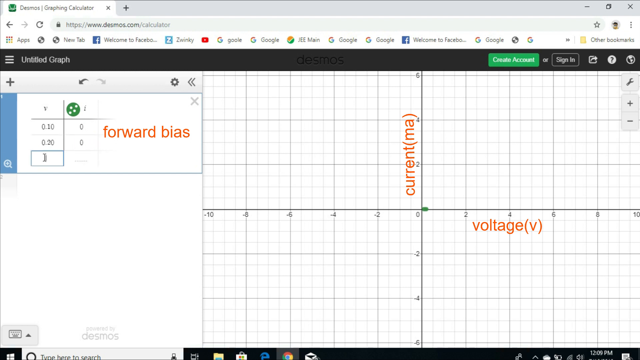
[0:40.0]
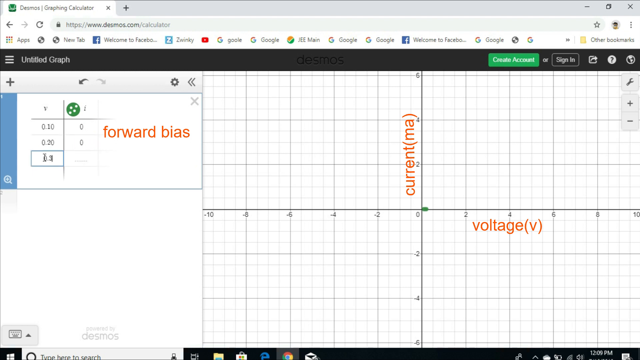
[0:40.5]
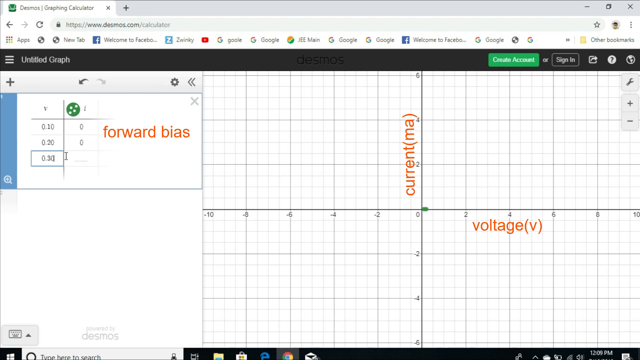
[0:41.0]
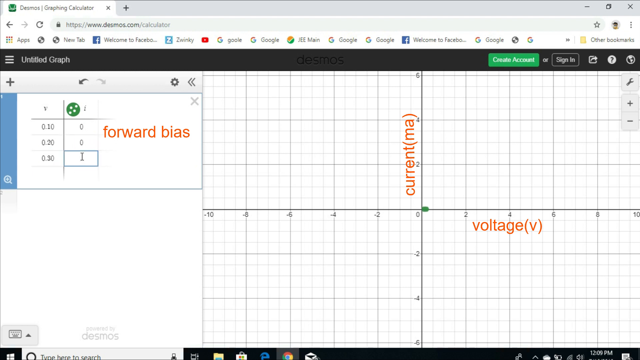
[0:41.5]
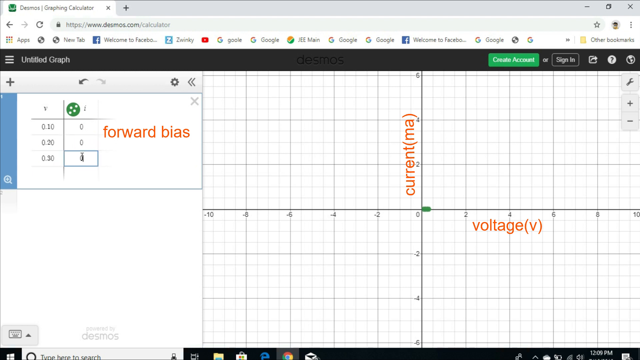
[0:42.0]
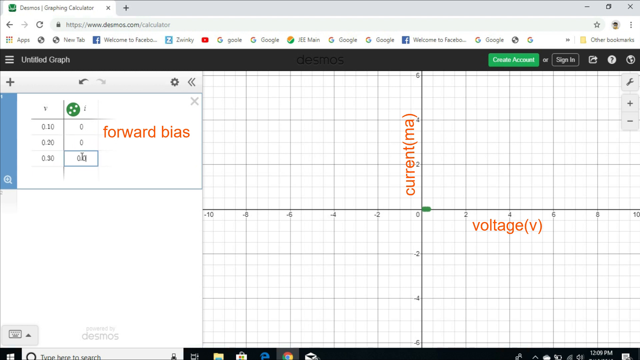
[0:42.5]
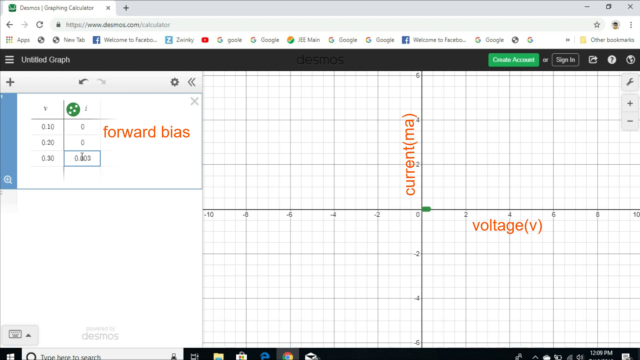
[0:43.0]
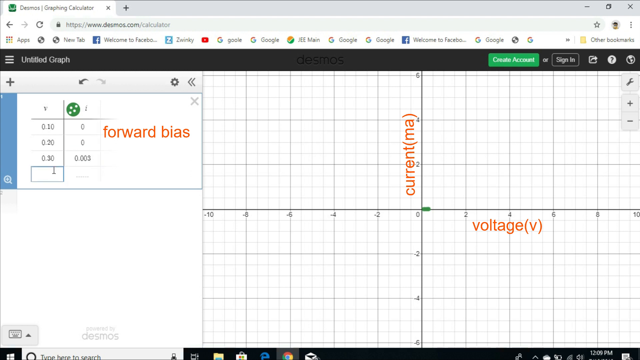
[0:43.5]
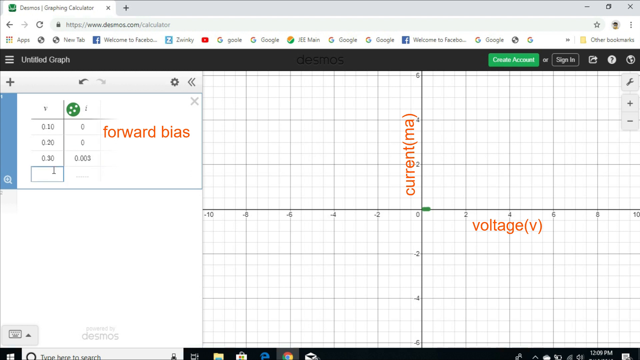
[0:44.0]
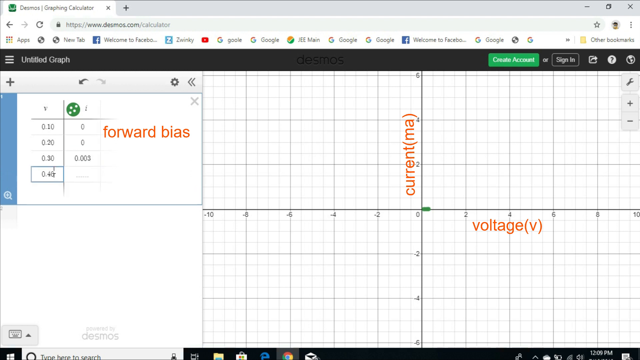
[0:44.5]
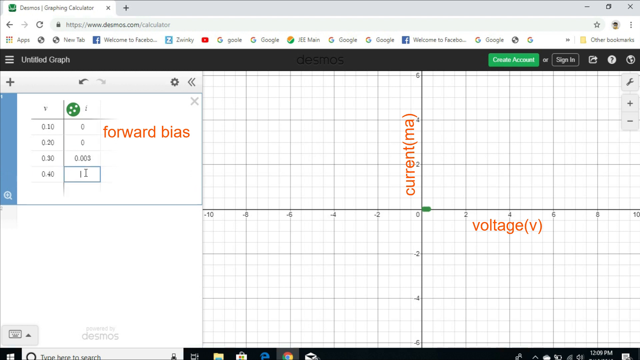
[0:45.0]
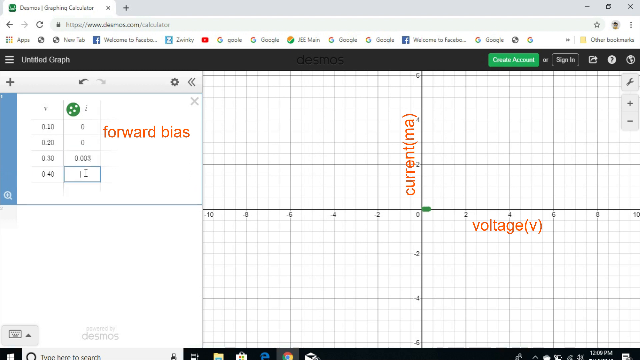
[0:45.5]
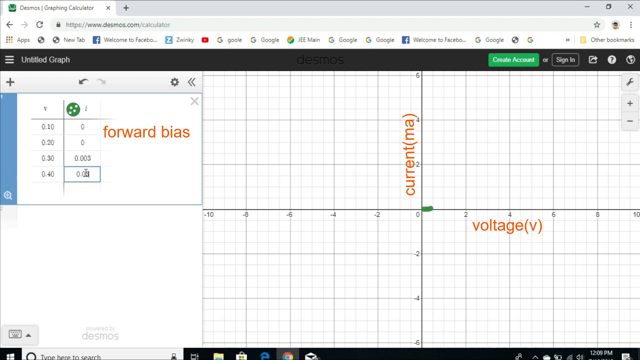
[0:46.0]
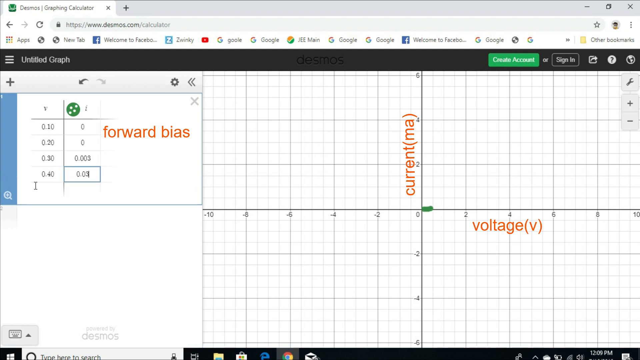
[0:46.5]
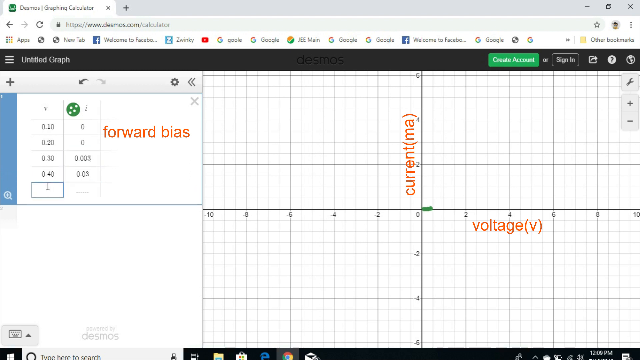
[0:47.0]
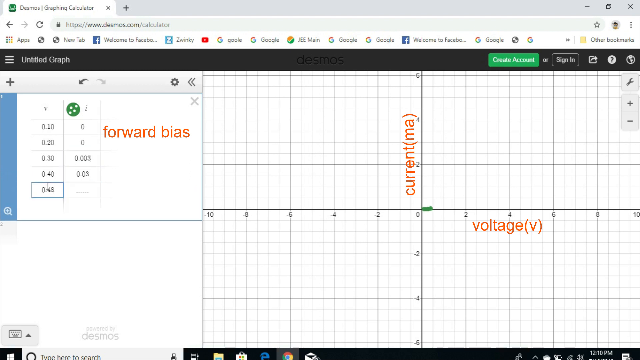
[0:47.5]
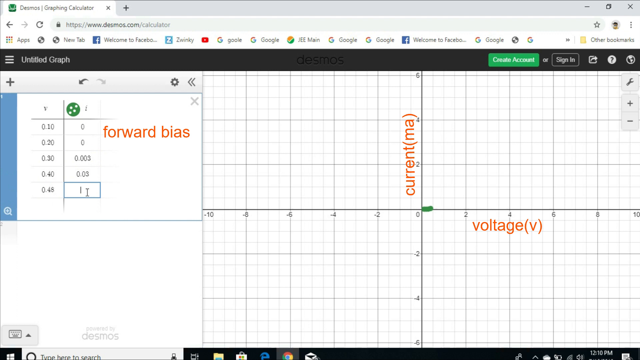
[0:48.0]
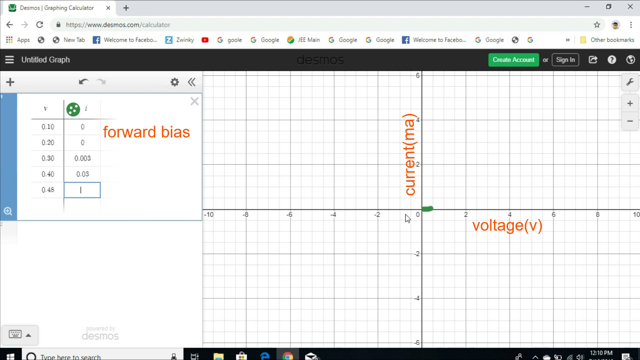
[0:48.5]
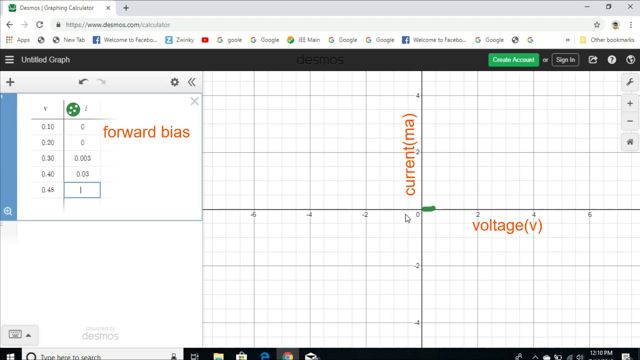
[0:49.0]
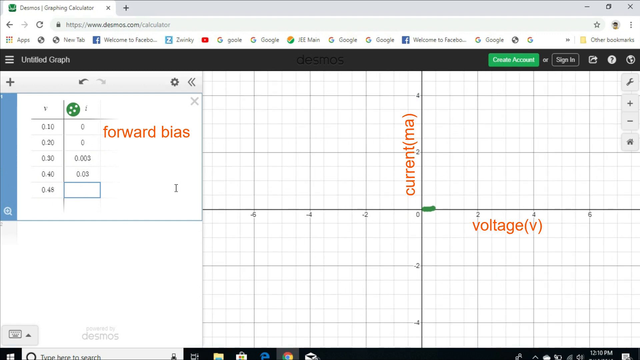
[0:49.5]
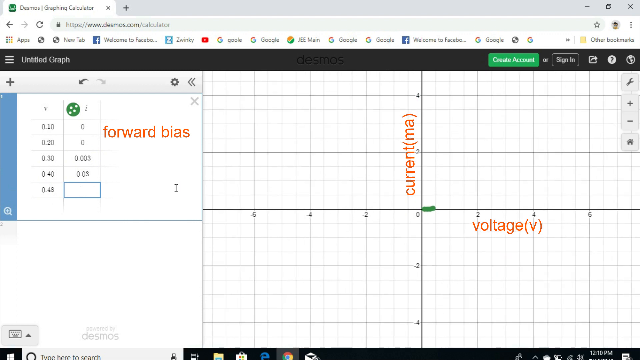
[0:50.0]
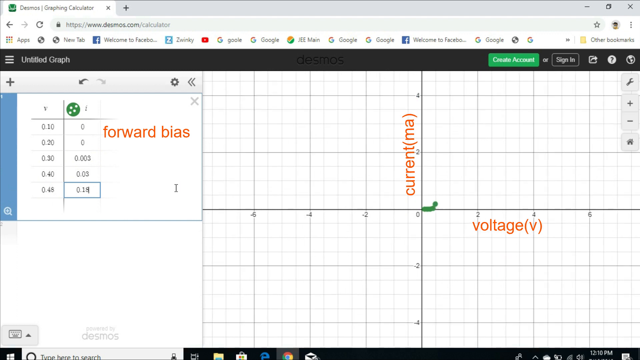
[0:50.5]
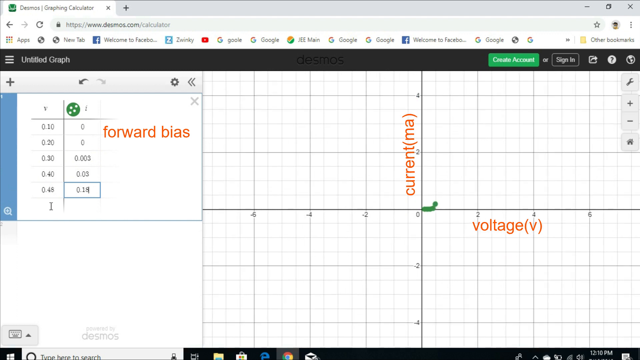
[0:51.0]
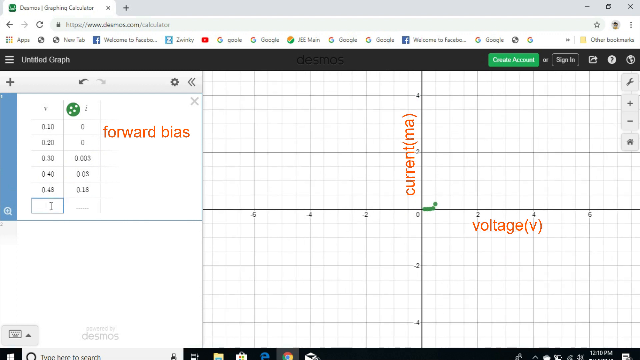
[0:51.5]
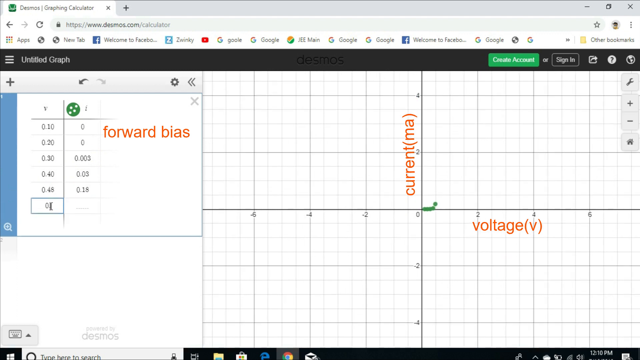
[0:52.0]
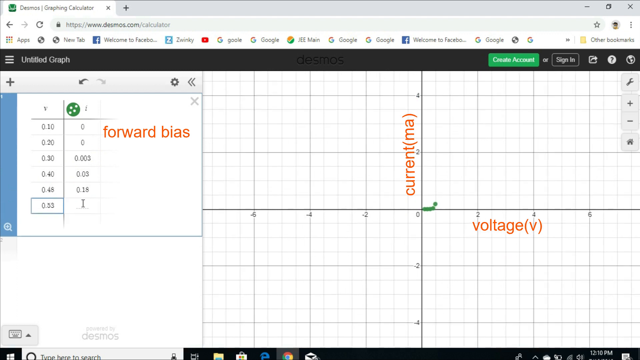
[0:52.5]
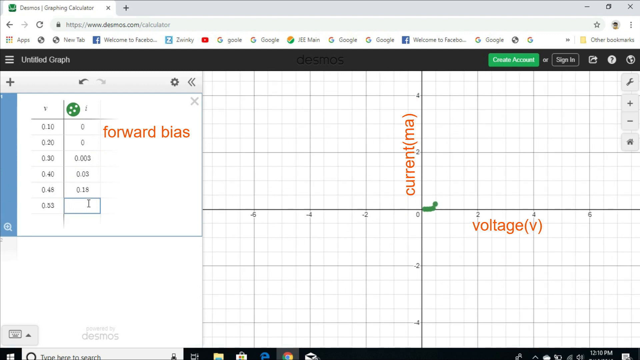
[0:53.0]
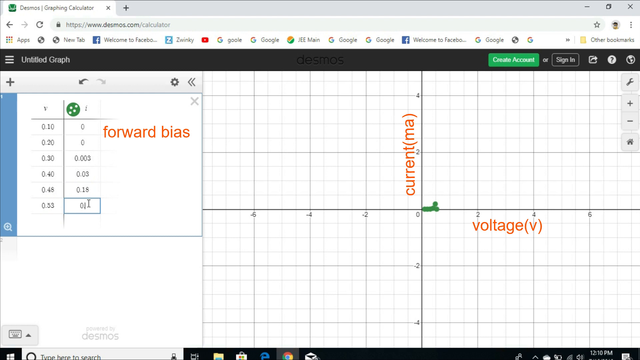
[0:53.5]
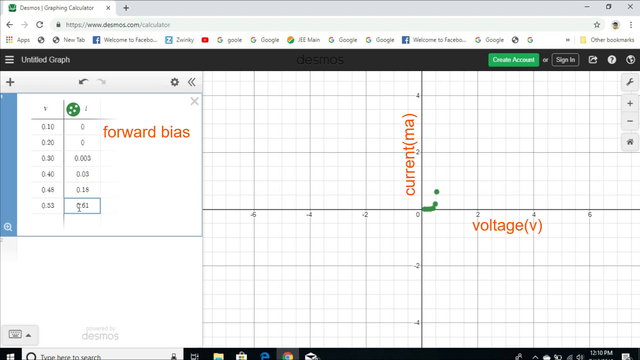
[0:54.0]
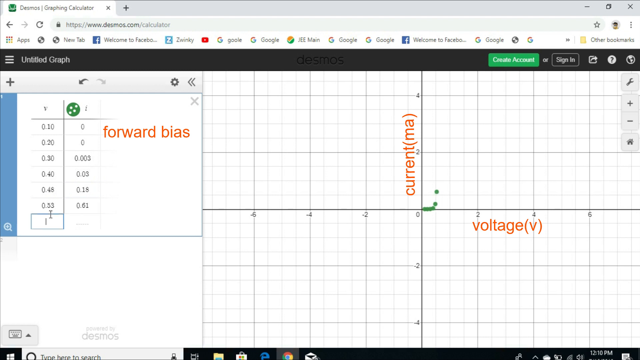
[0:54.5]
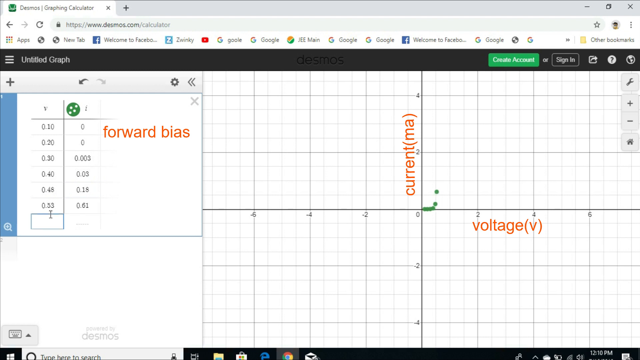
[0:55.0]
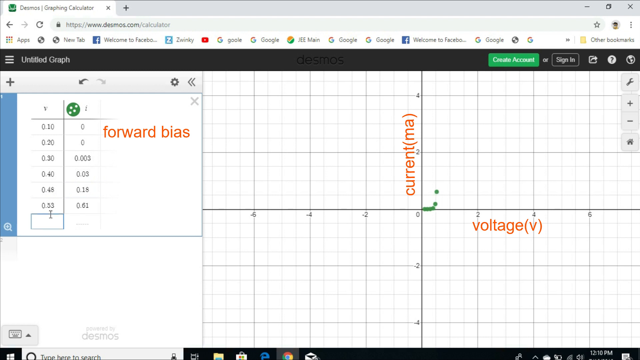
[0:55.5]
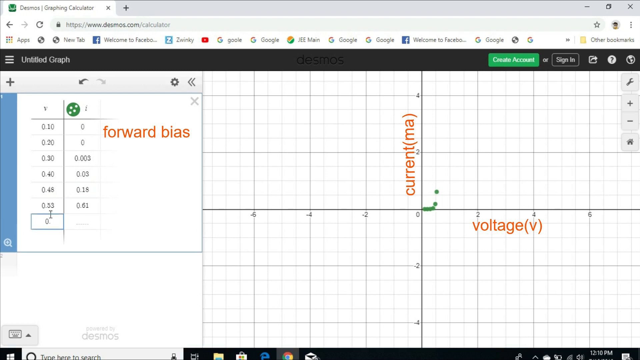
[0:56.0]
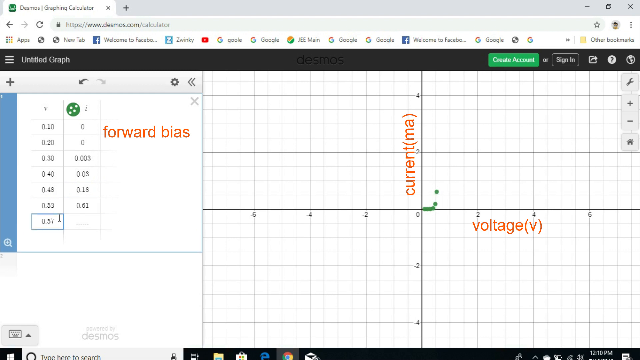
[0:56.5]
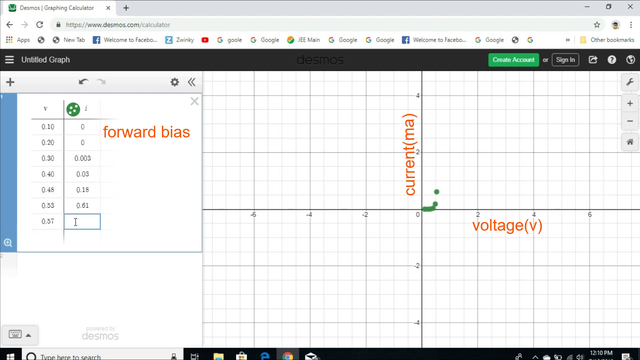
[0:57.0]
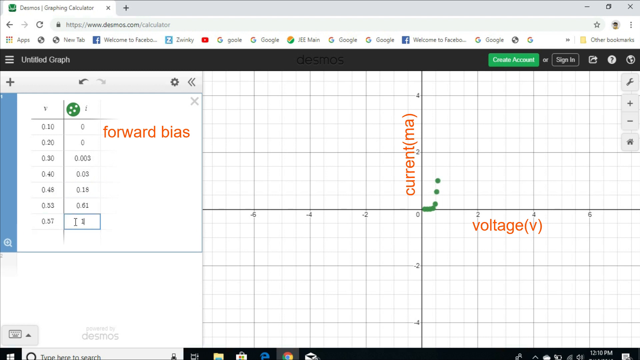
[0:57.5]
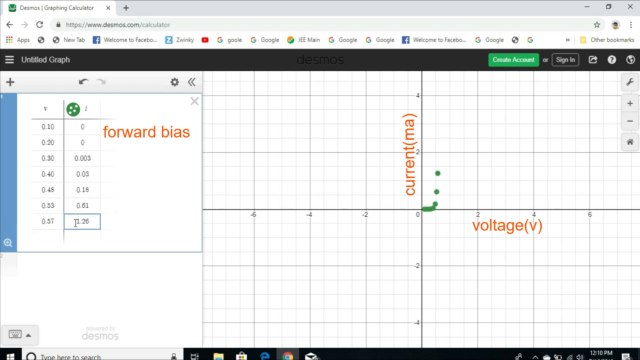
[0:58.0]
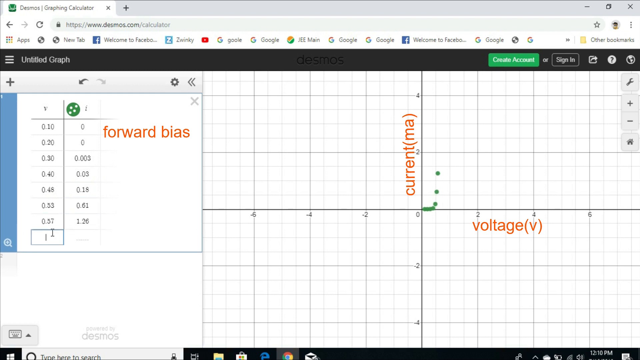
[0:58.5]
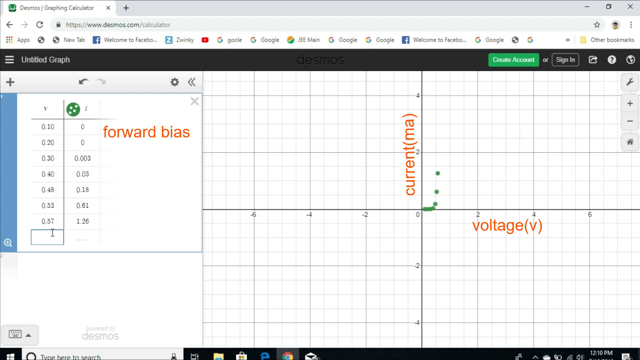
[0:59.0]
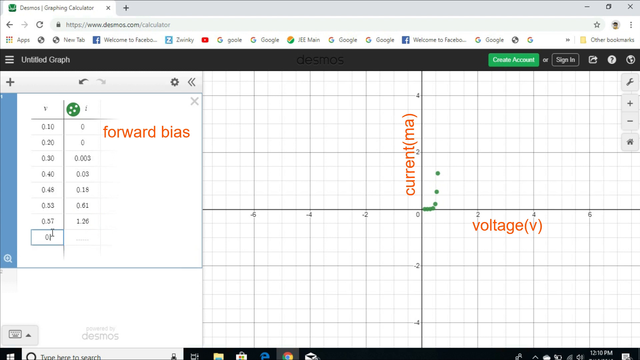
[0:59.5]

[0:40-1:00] The person keeps entering values: 0.30 in V and 0.003 in I, 0.40 in V and 0.03 in I, 0.48 in V and 0.18 in I, then 0.53 in V and 0.61 in I, and 0.57 in V and 1.26 in I. As they type, the graph automatically reflects the values. Green dots on the graph seem to form a very steep curve; the dots are not connected. The work is done on an untitled graph on Desmos, open in Google Chrome. The shot ends with the person seemingly still entering more values.